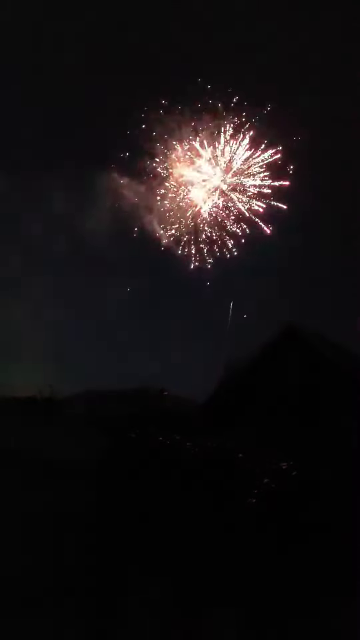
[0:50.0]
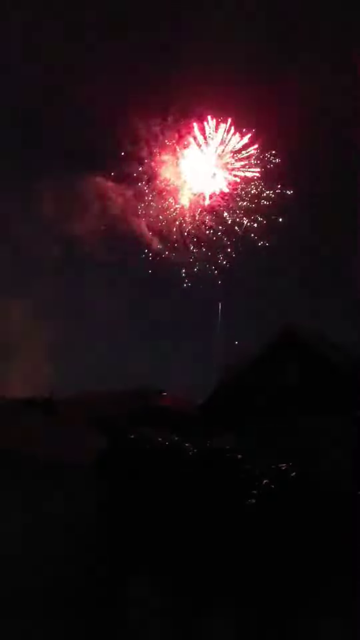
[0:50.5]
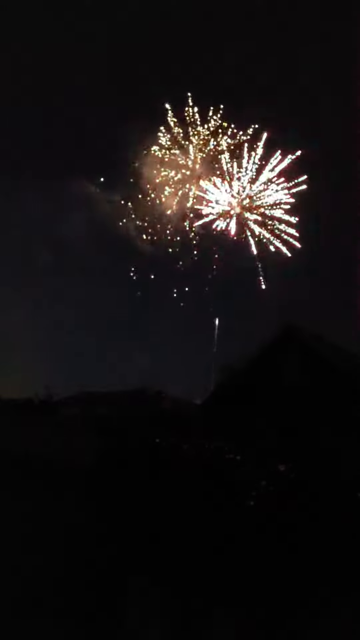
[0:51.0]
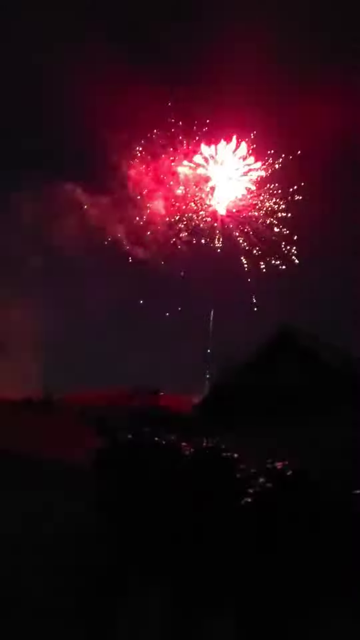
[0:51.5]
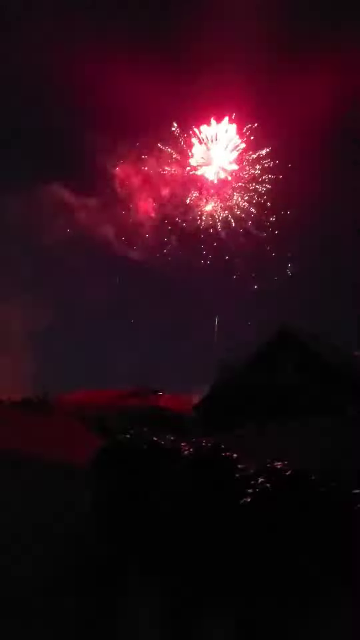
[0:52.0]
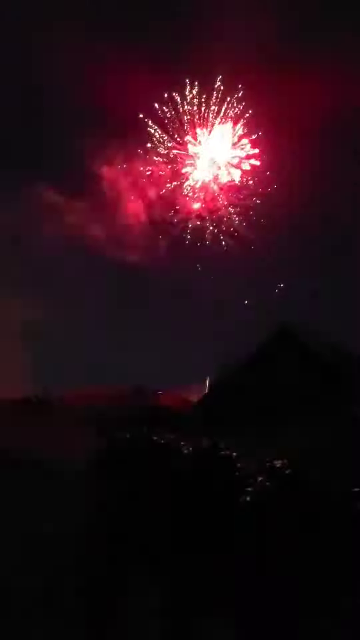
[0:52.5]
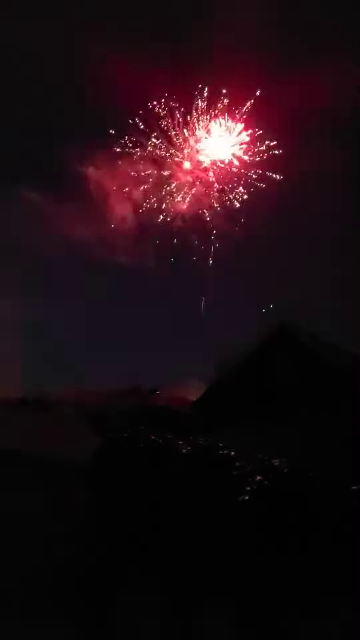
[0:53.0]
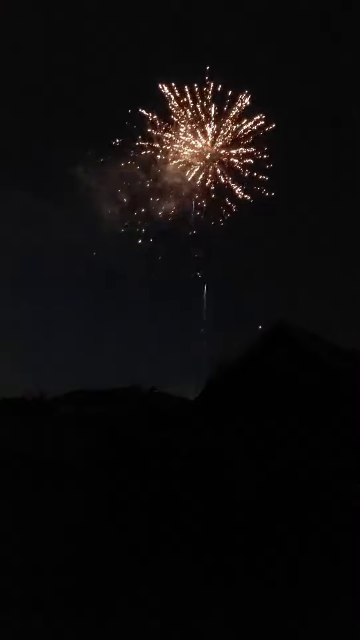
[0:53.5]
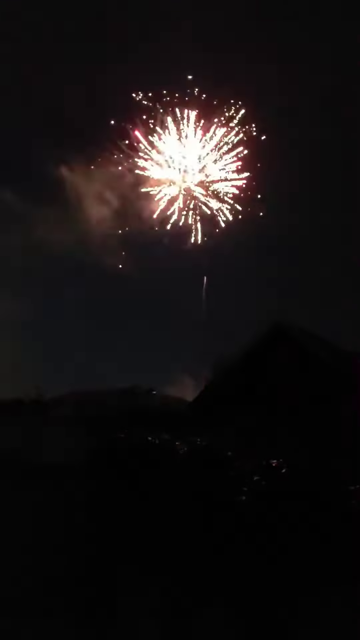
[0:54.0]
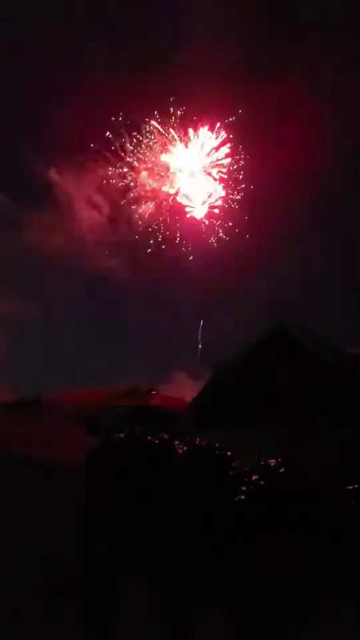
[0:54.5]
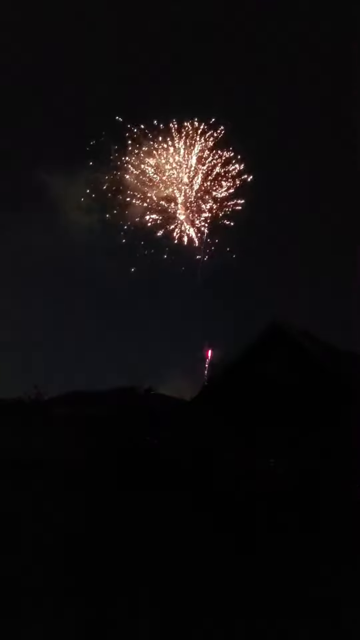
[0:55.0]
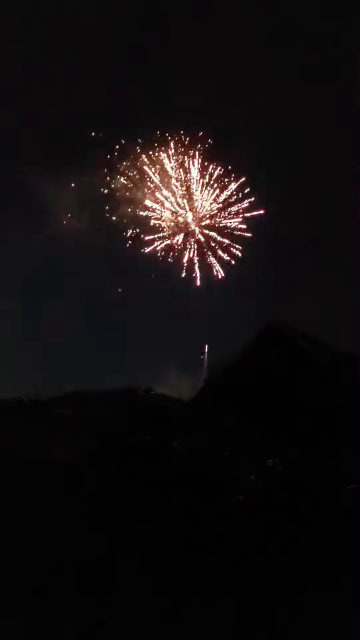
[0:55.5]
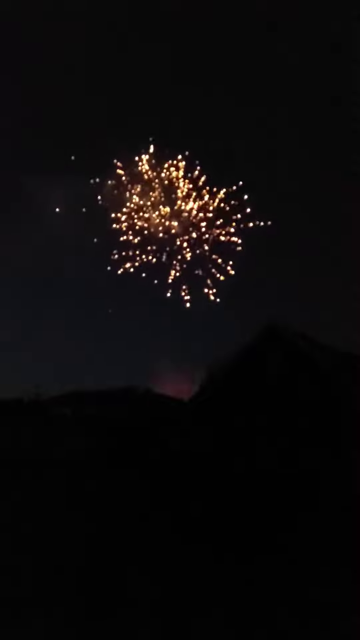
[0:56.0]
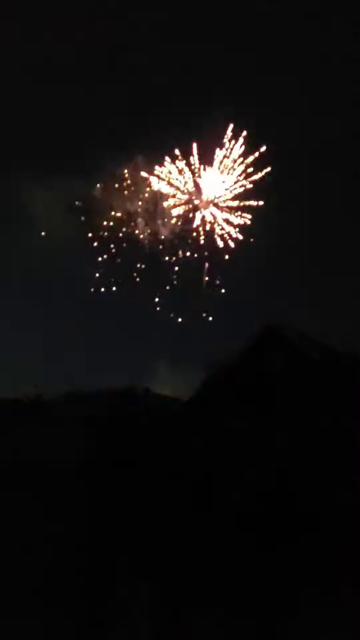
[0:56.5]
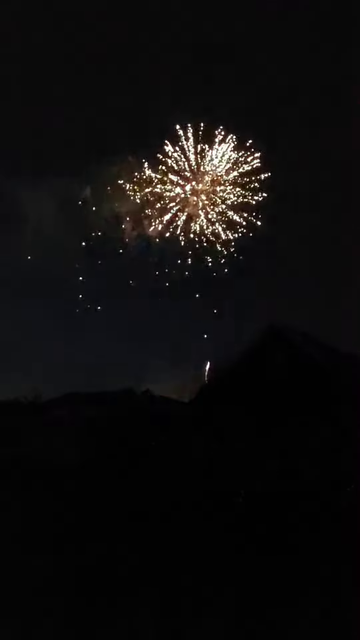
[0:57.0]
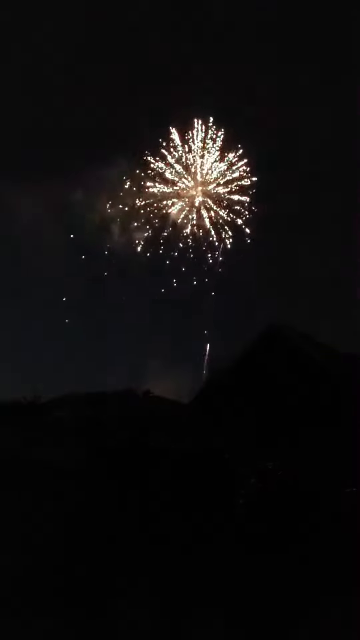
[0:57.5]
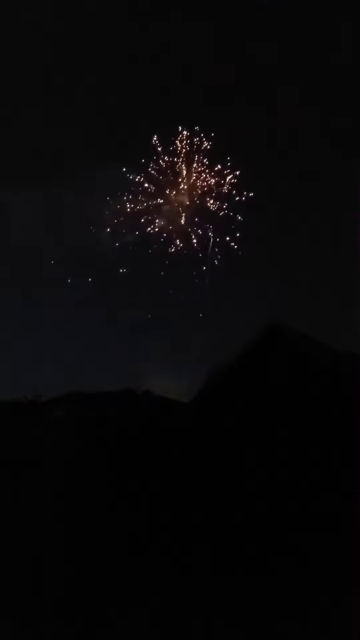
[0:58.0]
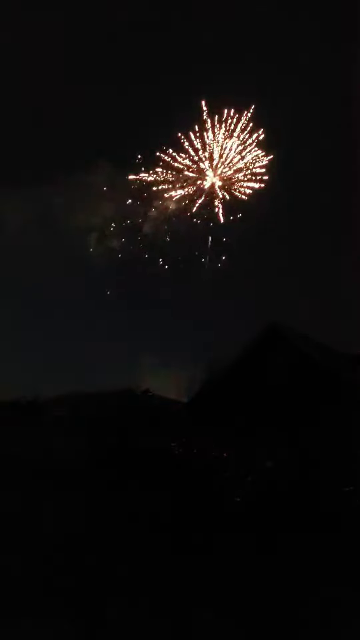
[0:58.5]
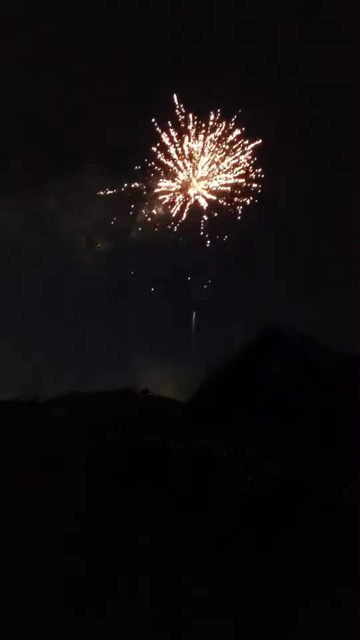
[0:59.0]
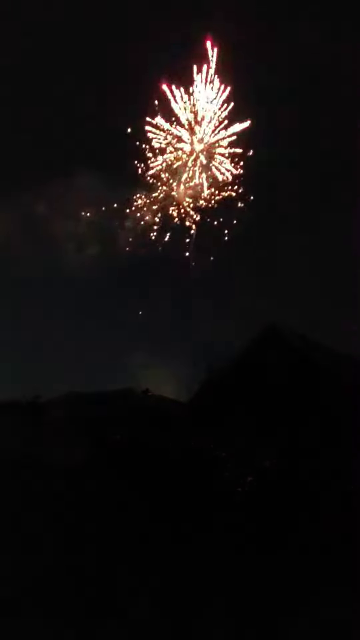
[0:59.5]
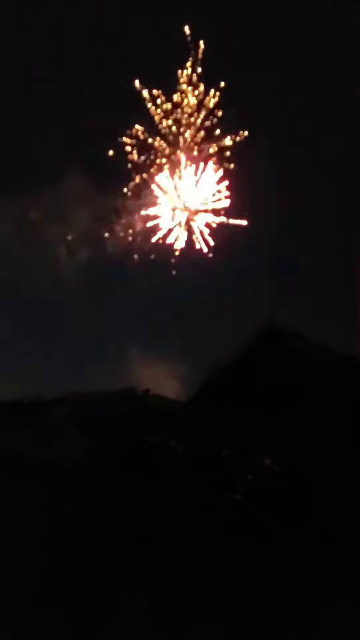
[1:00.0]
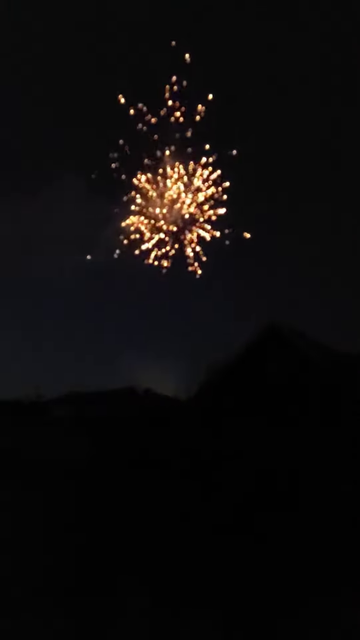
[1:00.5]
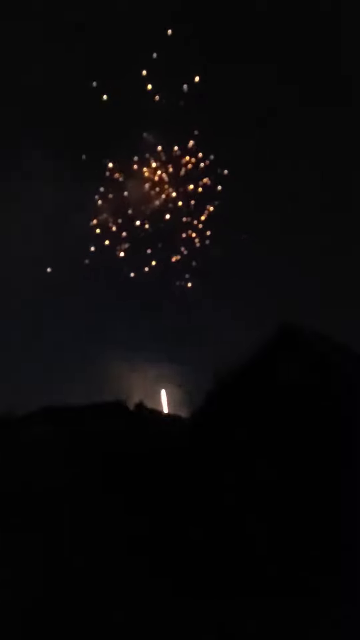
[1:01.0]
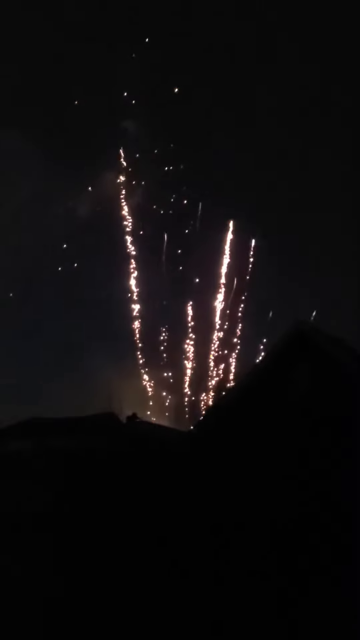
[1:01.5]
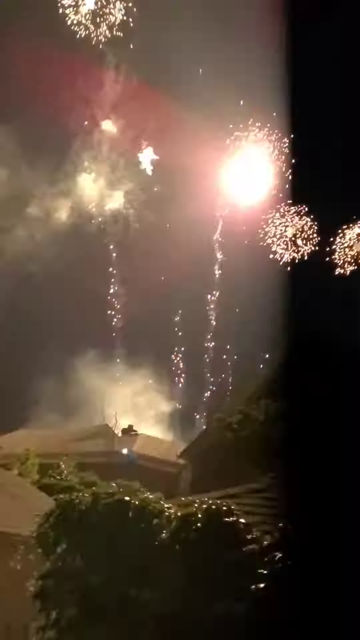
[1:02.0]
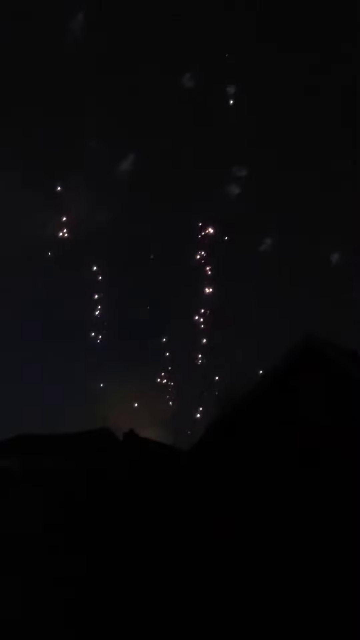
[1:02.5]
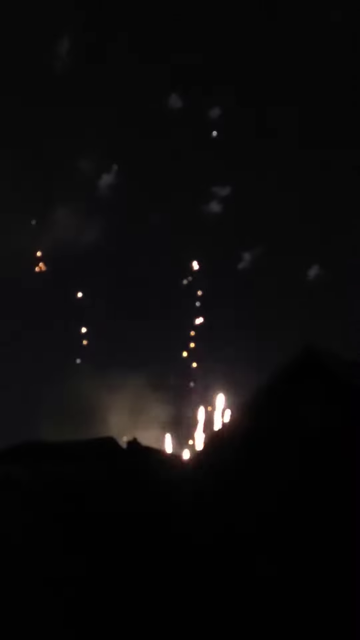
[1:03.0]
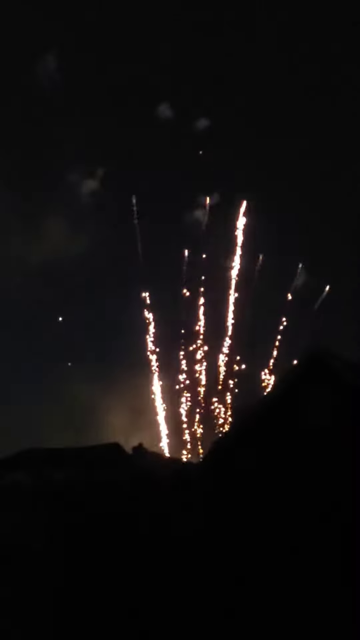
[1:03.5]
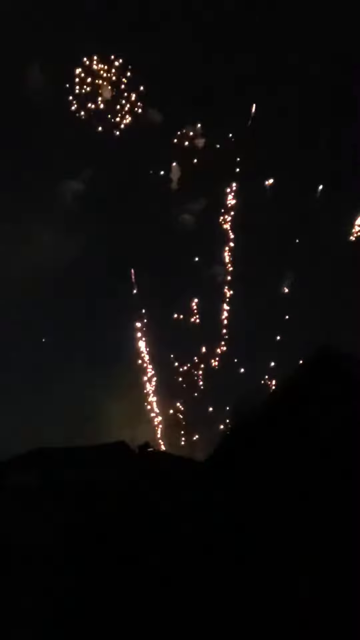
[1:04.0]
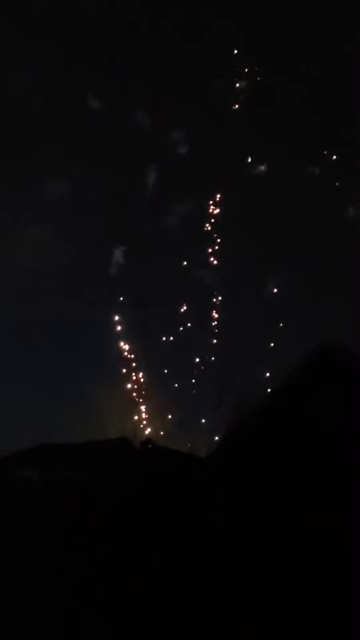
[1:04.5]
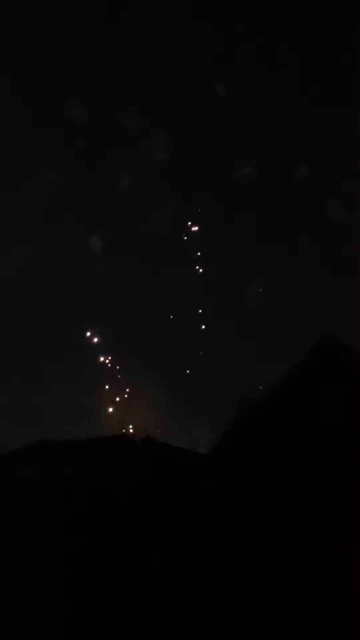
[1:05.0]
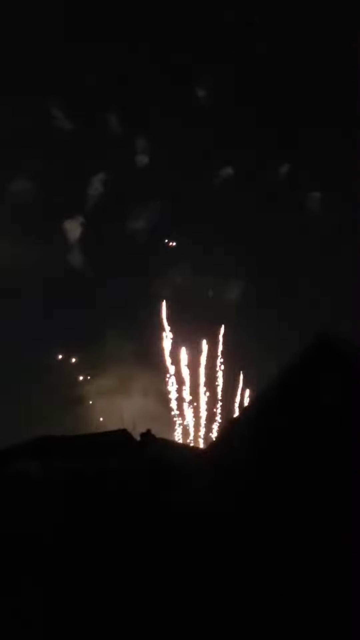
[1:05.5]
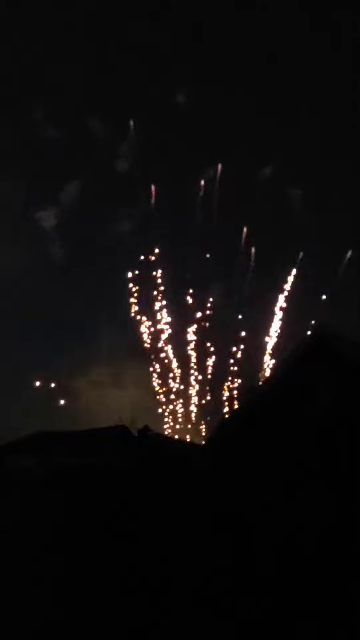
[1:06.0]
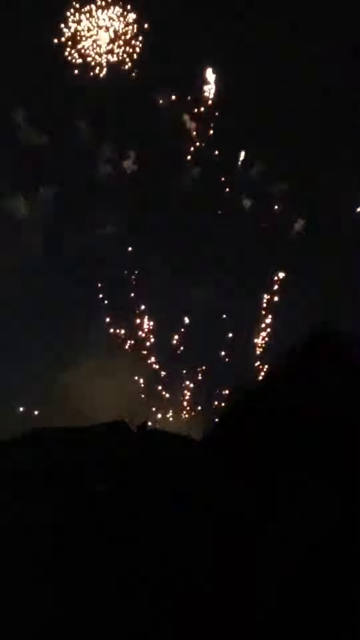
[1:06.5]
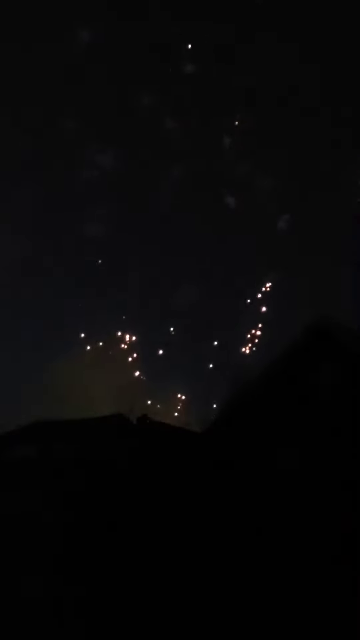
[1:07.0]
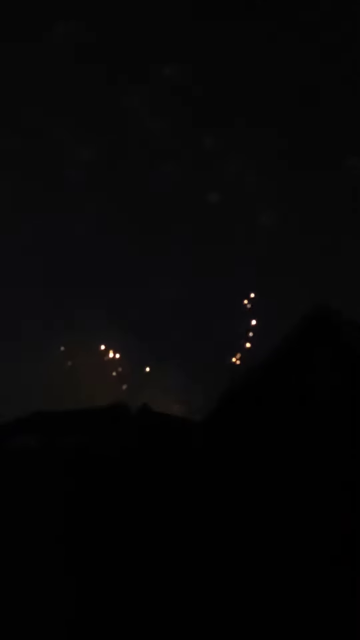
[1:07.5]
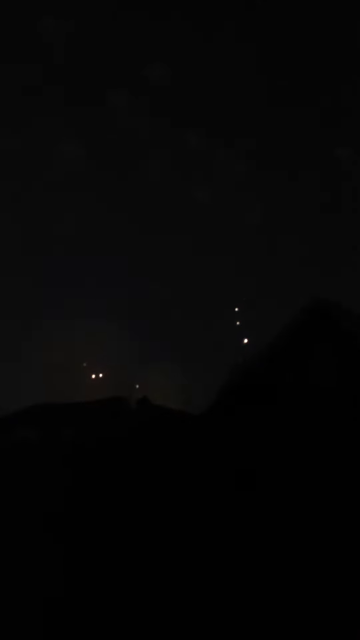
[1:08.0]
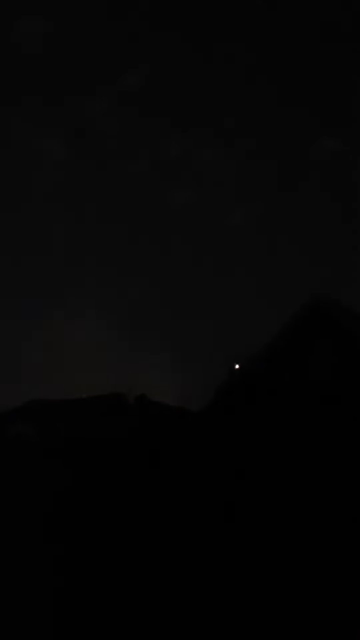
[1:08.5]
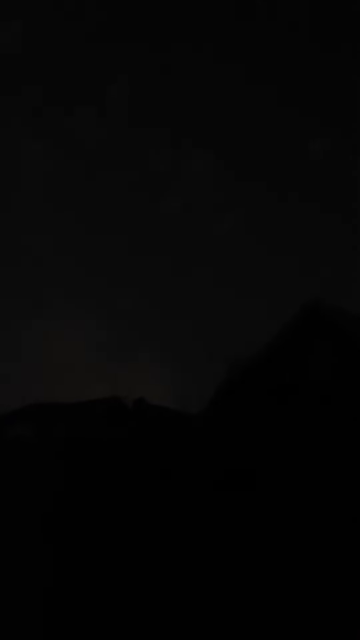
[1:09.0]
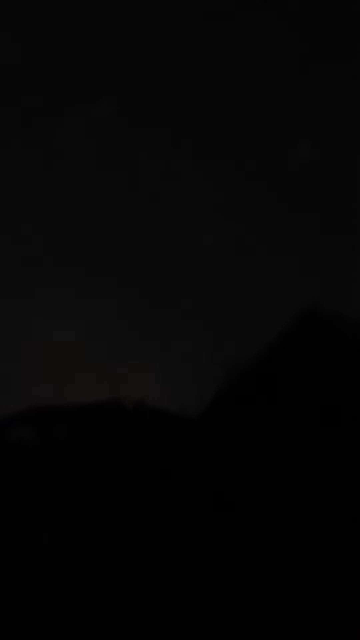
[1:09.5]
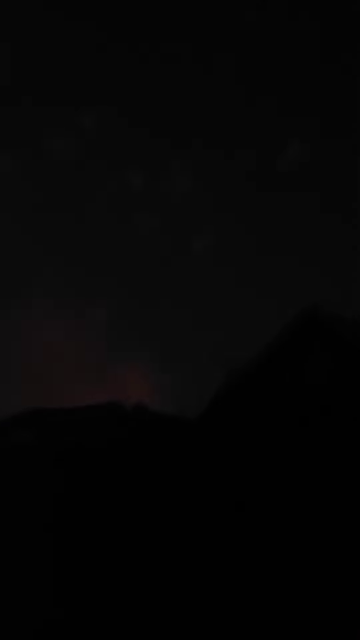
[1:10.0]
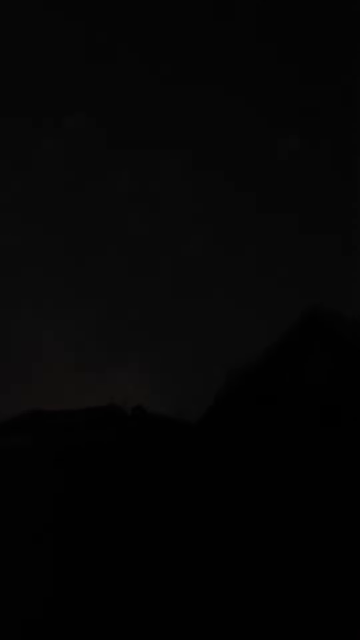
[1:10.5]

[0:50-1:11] What appears to be the grand finale of the fireworks display begins, with multiple fireworks firing with great intensity. Toward the end, five to seven fireworks shoot into the night sky simultaneously, exploding with high energy and illuminating the ground below. Whenever the fireworks flash, the farming community becomes visible: rows of crops and a farmhouse toward the center of the screen, a little to the right. There is no snow on the ground or anything indicating cold weather, and it looks like summer based on the size of the crops.